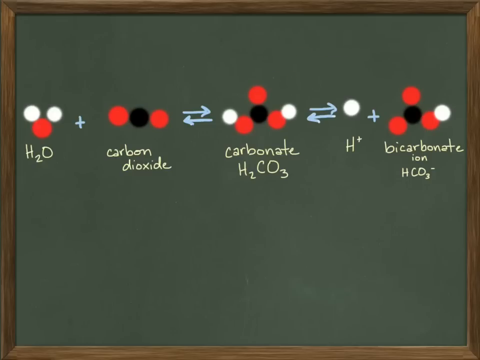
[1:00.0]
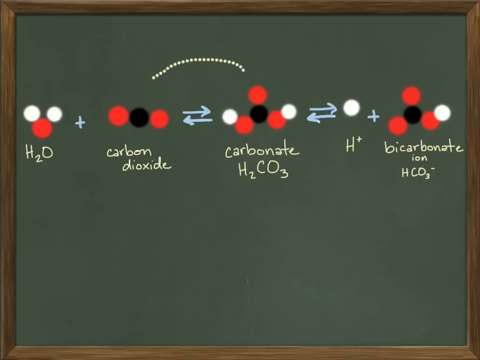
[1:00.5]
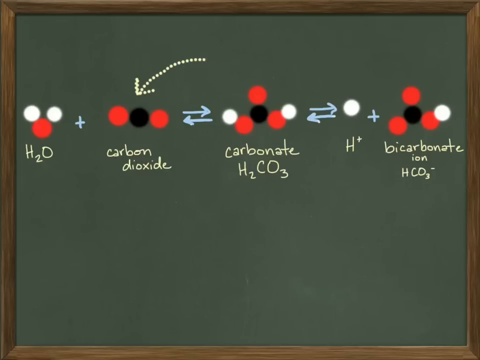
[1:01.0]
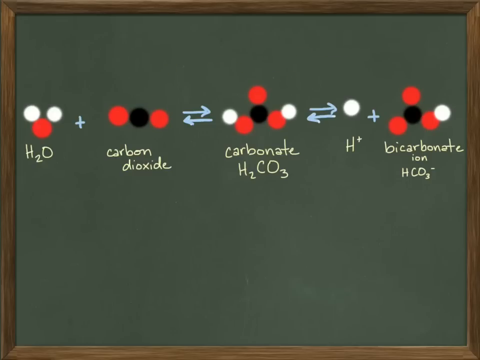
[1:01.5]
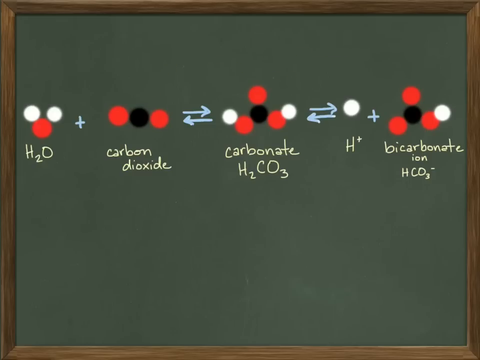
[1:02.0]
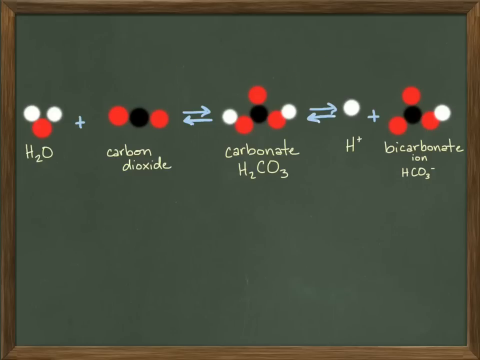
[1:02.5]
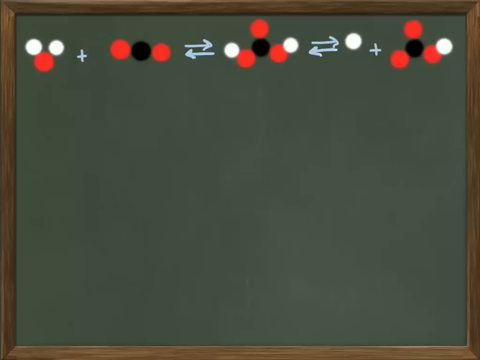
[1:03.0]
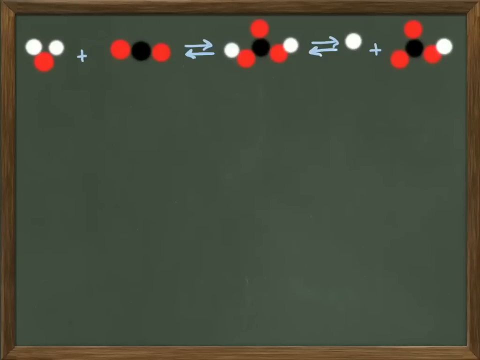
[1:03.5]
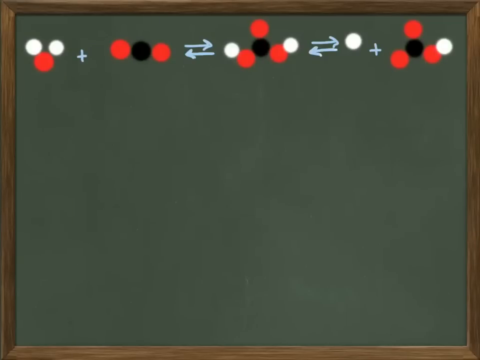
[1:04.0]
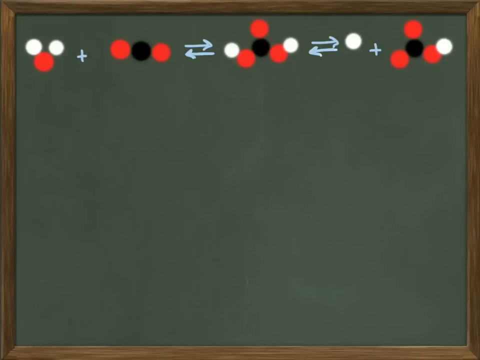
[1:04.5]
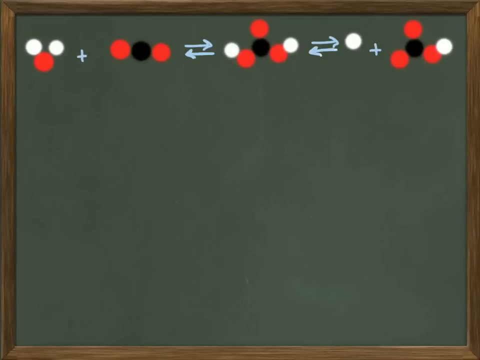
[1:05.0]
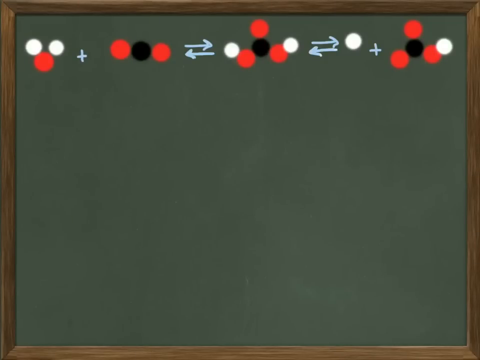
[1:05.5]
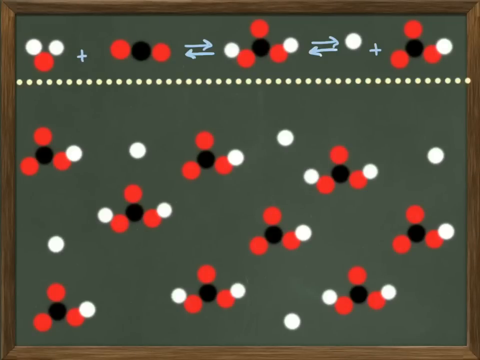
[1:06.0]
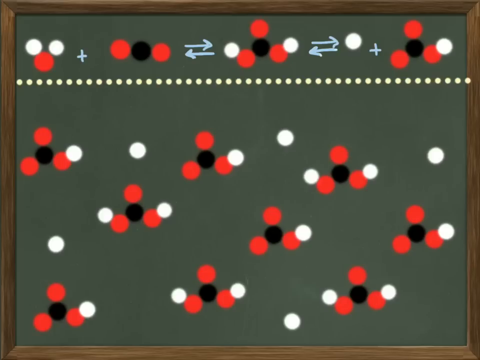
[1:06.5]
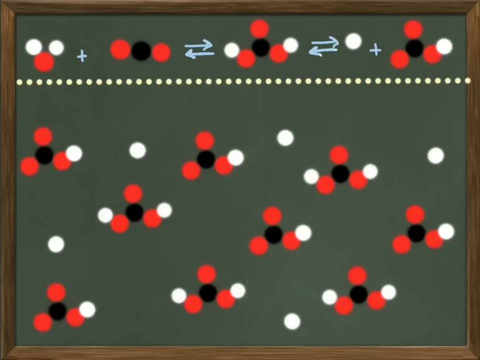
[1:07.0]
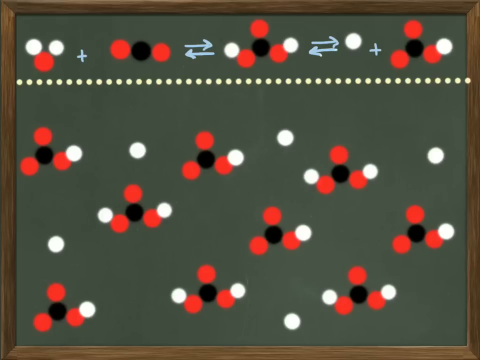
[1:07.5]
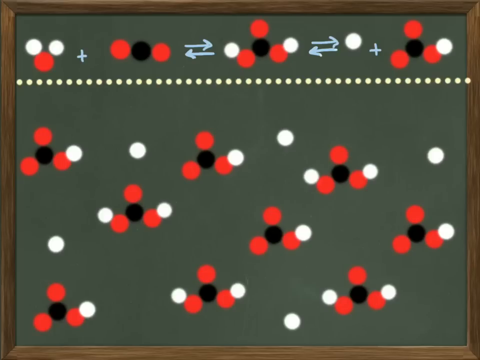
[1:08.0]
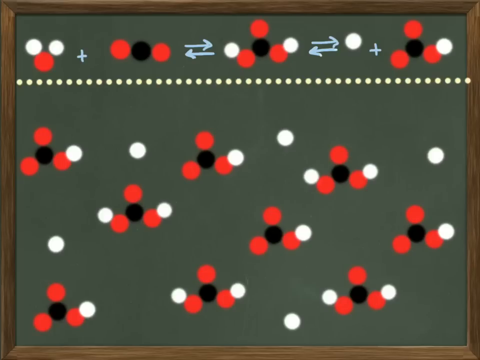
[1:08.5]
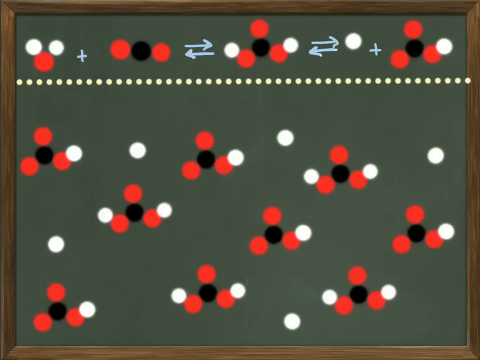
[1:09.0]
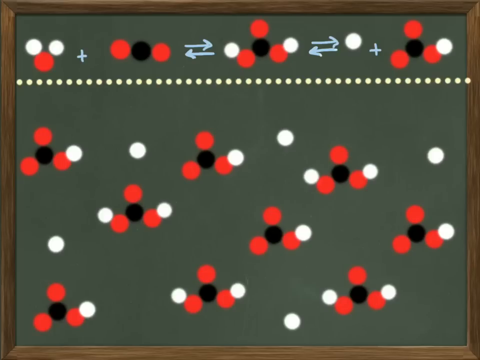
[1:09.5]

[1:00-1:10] The green chalkboard shows "H2O" plus "carbon dioxide", then two arrows going both ways to "carbonate H2CO3", then another set of arrows going both ways to "H+" plus "bicarbonate ion HCO3-". An arrow points down toward the carbon dioxide. Suddenly many dotted lines appear, with bicarbonate in the middle and white dots everywhere, and the board goes from blank to very busy. Carbonate H2CO3 appears everywhere, as do the white dots, which are presumably oxygen; the oxygen and carbonate circles seem to be all over the board.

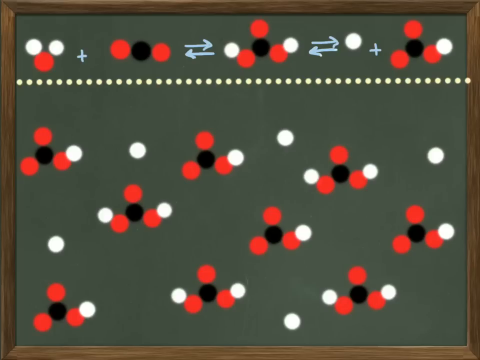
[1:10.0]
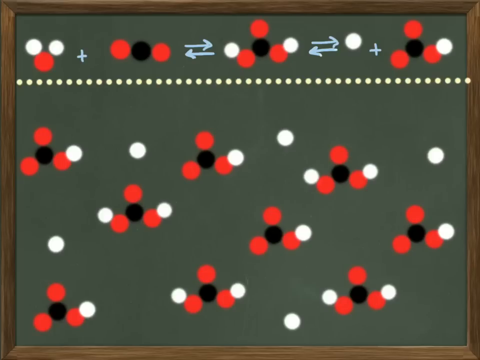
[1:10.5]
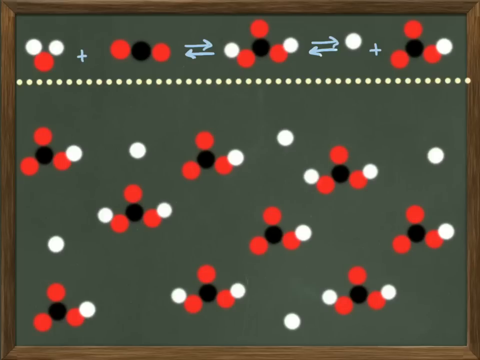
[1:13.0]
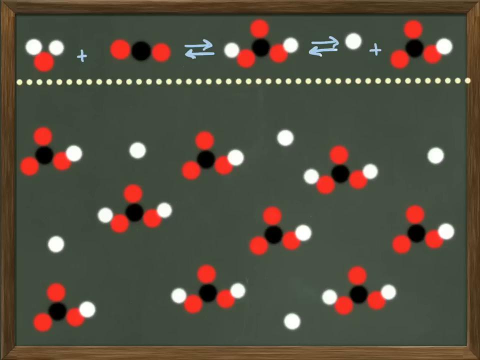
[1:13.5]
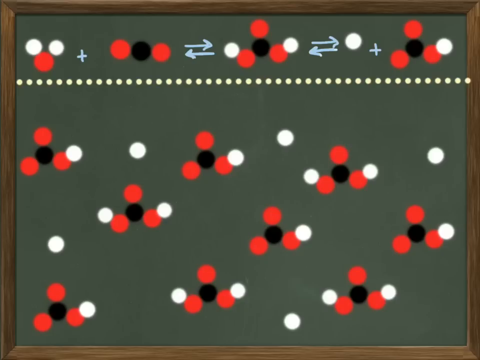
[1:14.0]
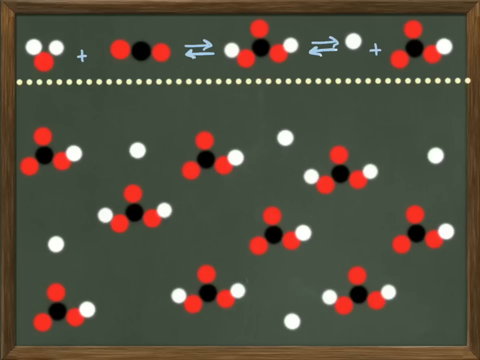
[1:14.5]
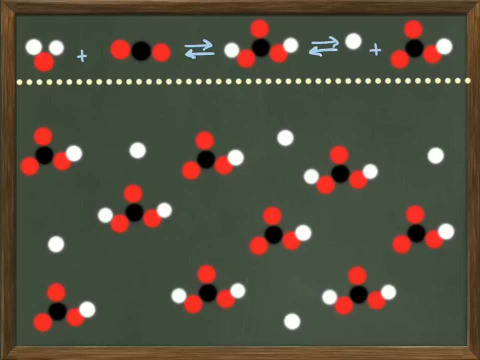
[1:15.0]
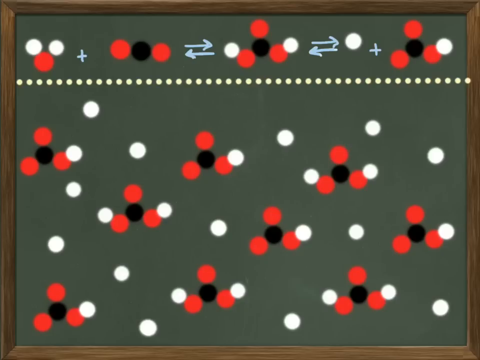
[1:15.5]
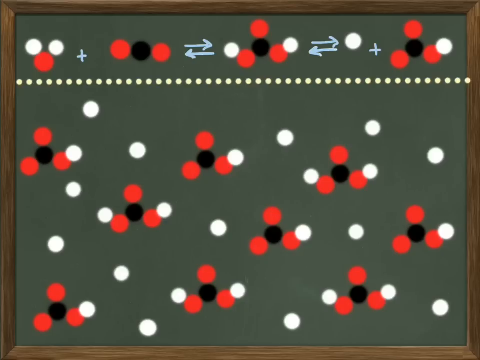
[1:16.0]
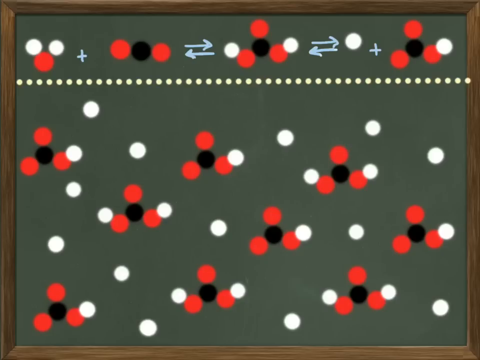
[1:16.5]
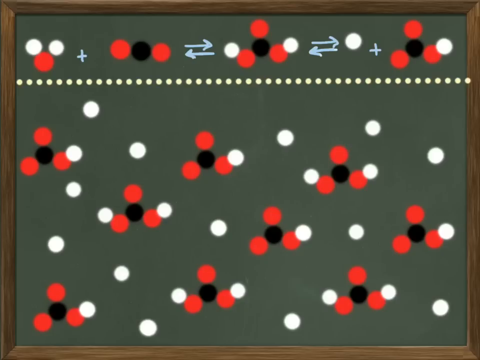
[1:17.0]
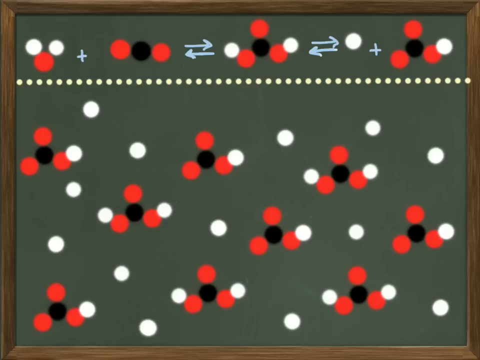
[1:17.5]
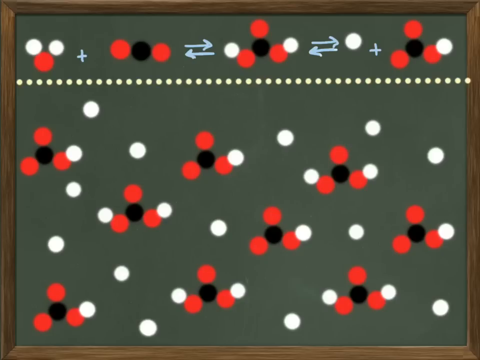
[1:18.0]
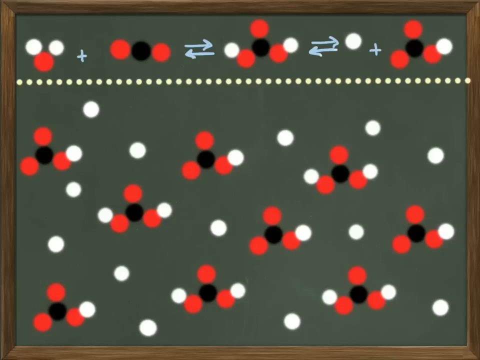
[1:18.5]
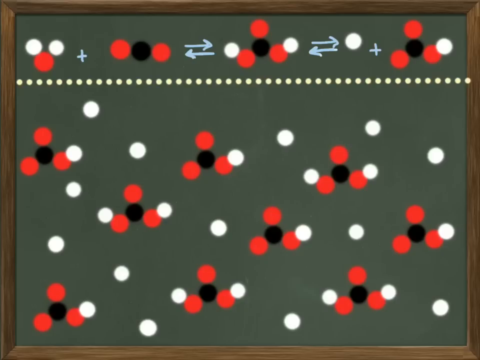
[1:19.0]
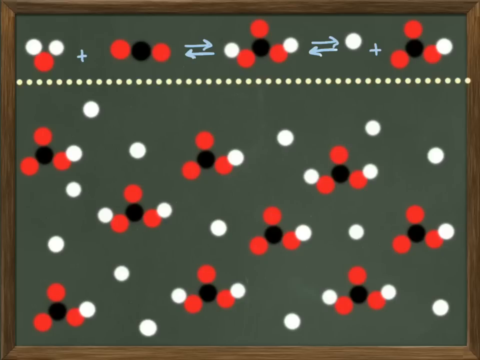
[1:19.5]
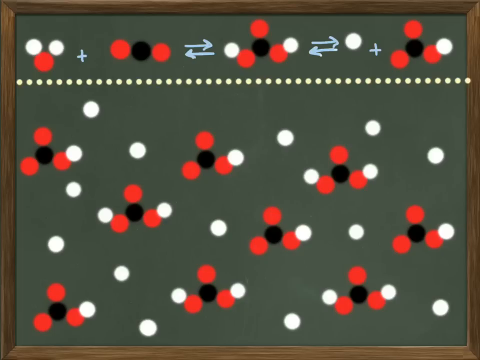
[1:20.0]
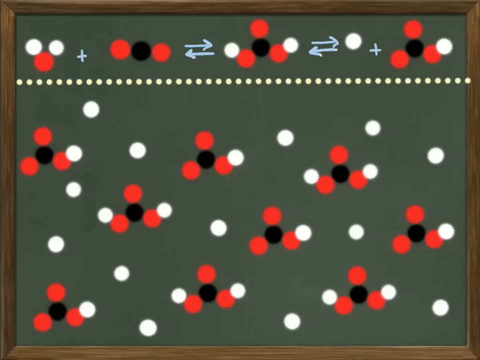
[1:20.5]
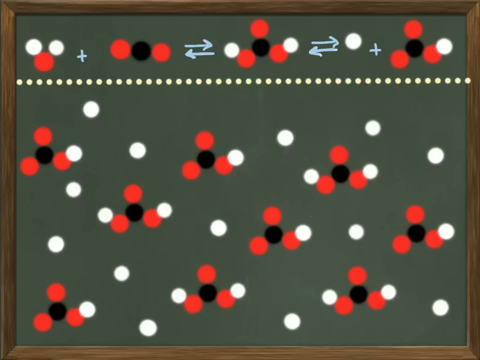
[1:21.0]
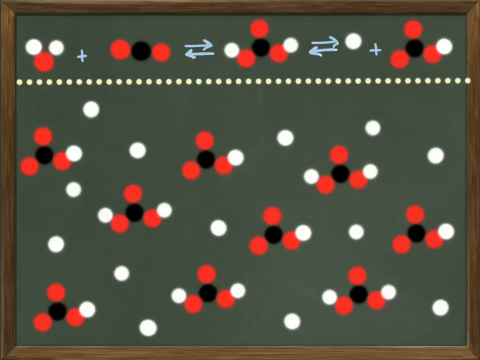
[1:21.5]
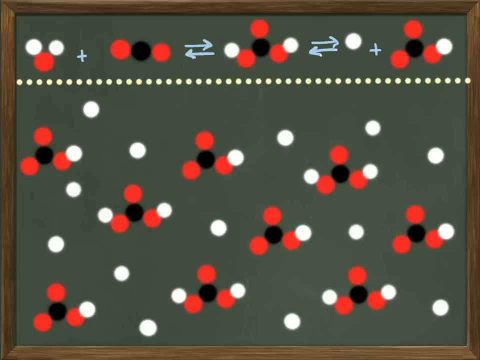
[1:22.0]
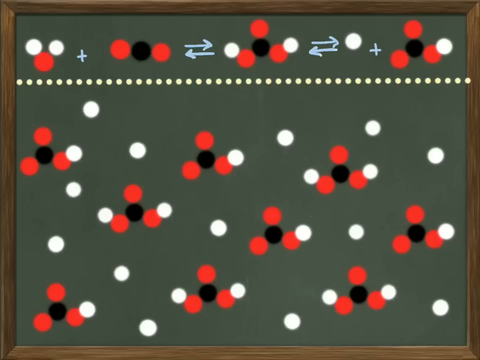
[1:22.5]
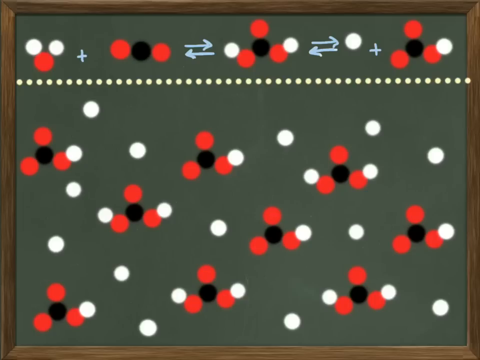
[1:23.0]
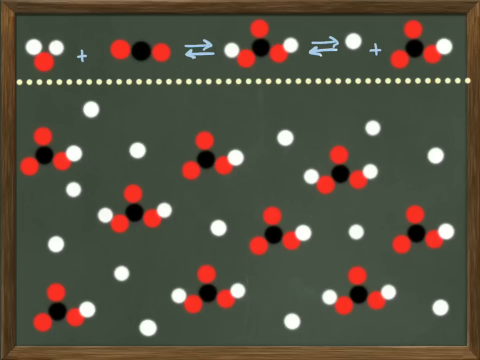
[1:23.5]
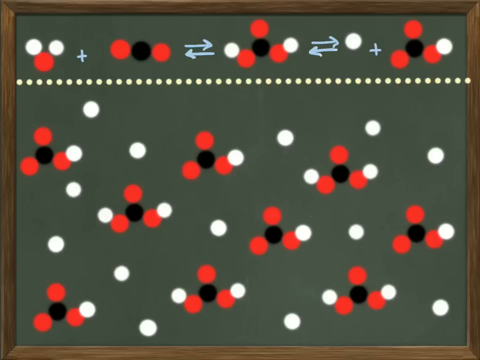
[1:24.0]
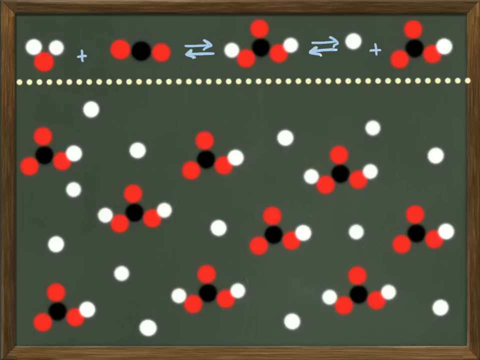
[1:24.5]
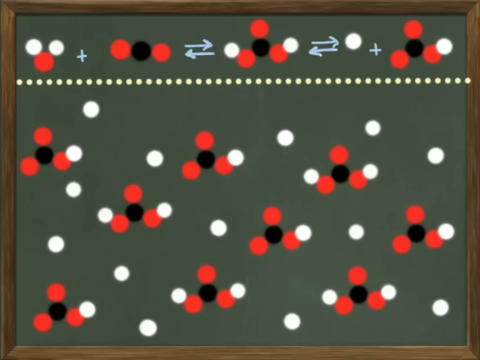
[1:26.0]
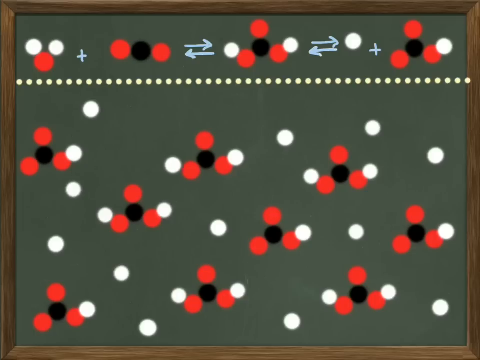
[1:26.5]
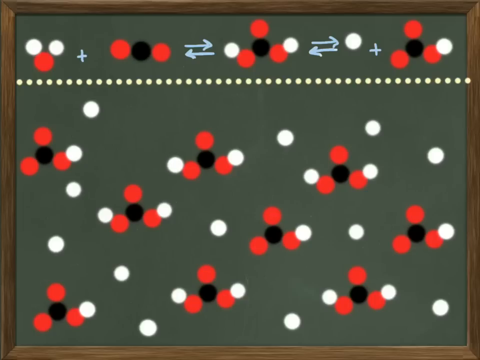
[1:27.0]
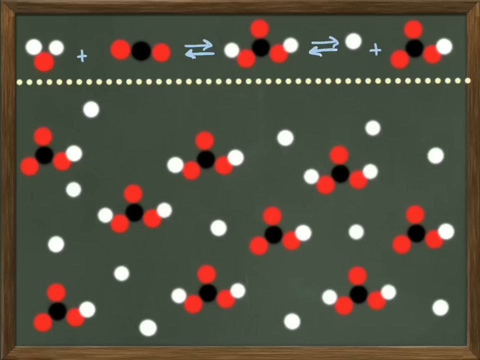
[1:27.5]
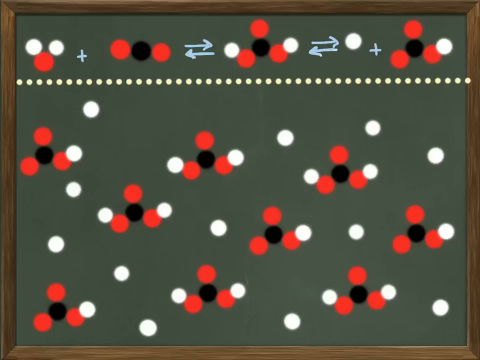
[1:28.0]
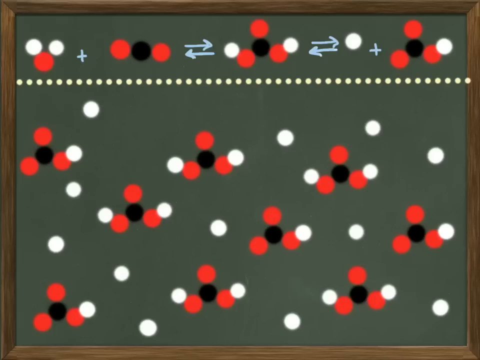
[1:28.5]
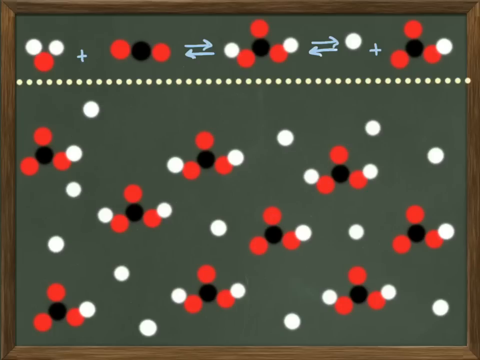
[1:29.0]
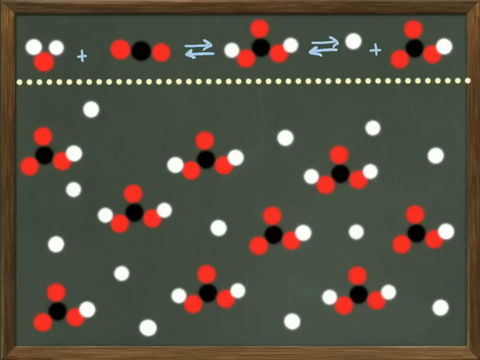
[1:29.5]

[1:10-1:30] The chalkboard has many different equations and seems very busy. Bicarbonate and oxygen circles are everywhere on the board. The equation is up top, and many tiny circles seem to be covering it. Some of the white circles are moved: a white circle moves from left to right, then many white circles move, and they keep moving, with the ions shifting from one area to another.